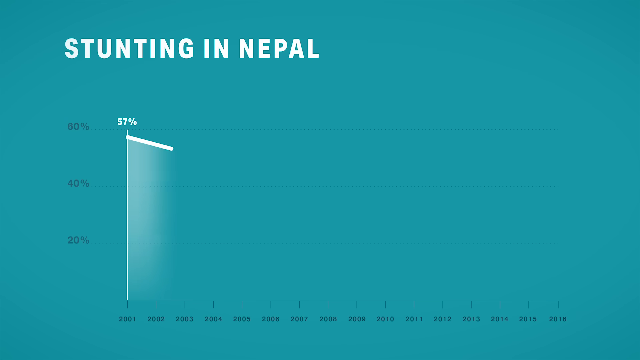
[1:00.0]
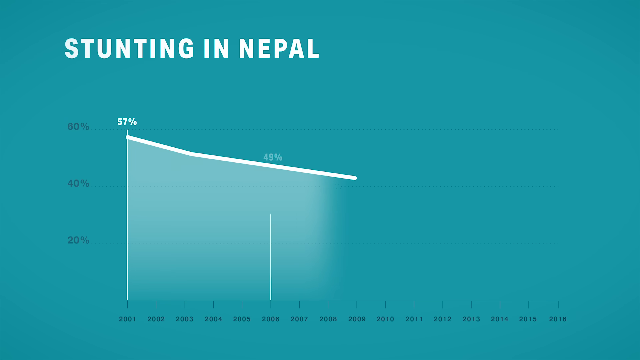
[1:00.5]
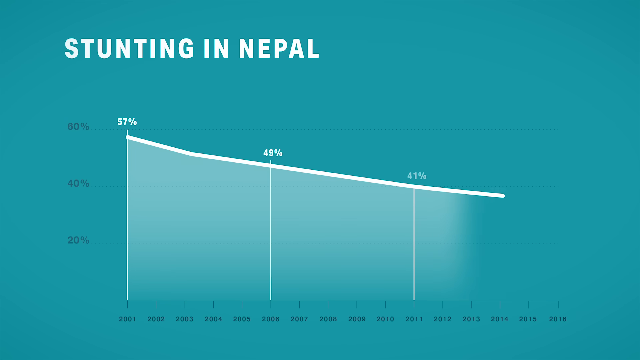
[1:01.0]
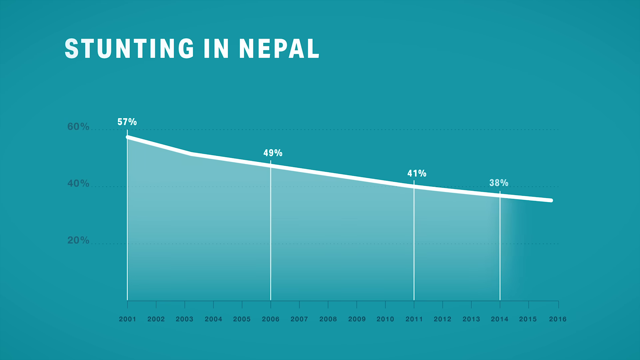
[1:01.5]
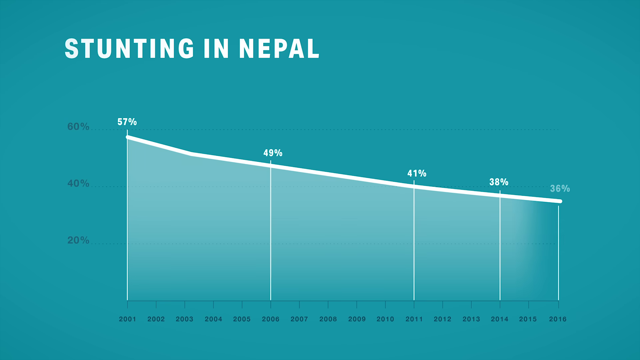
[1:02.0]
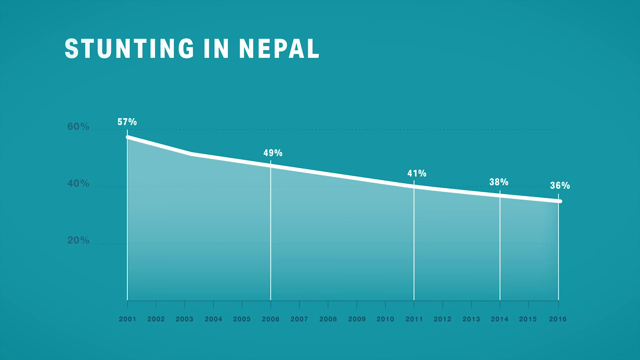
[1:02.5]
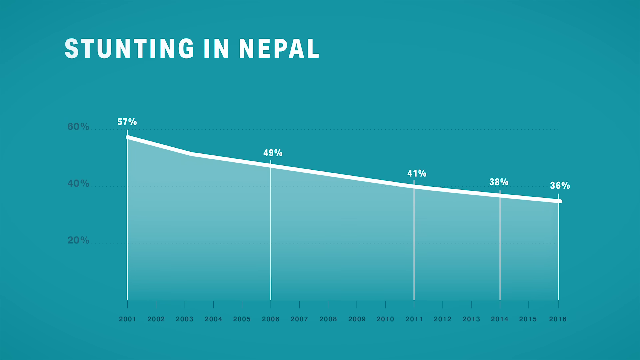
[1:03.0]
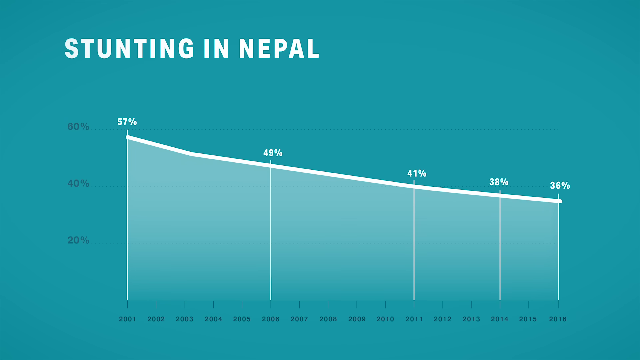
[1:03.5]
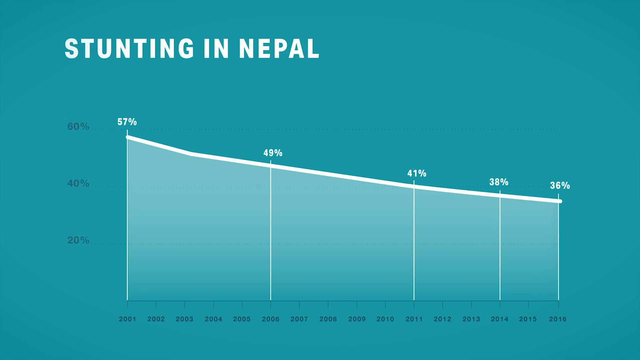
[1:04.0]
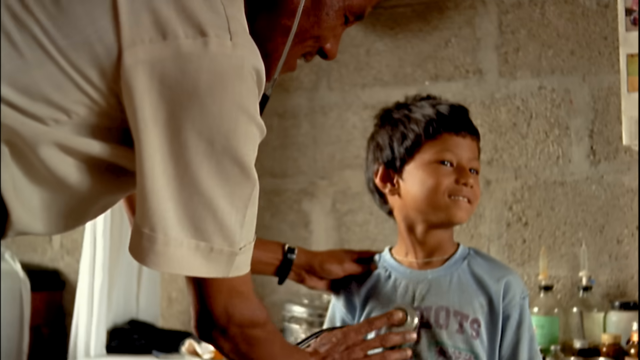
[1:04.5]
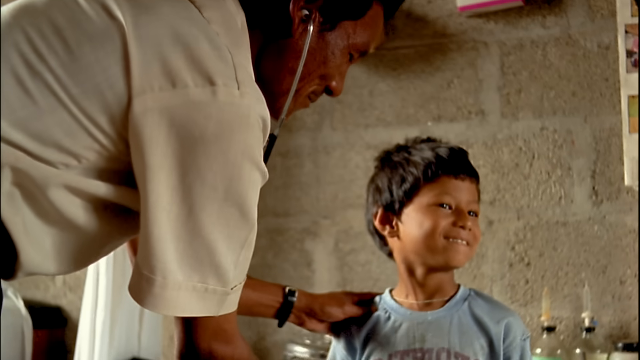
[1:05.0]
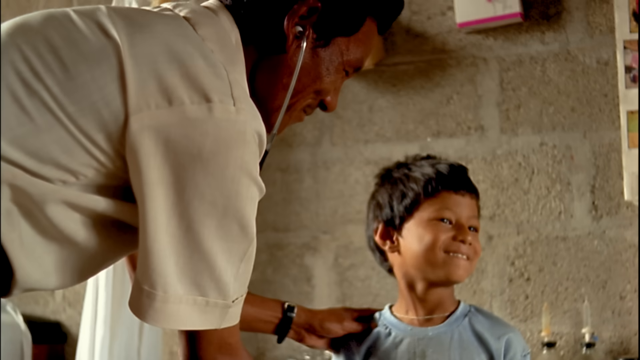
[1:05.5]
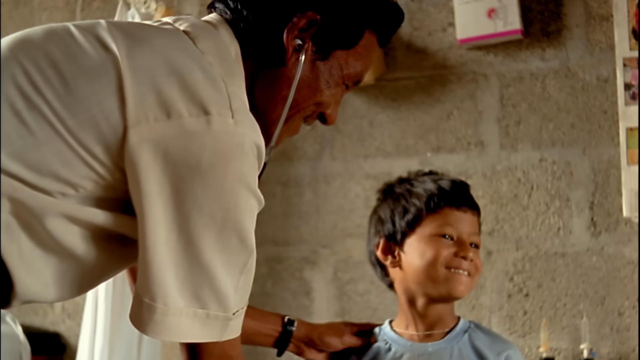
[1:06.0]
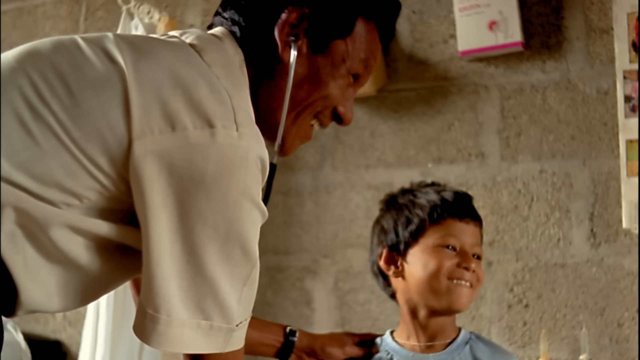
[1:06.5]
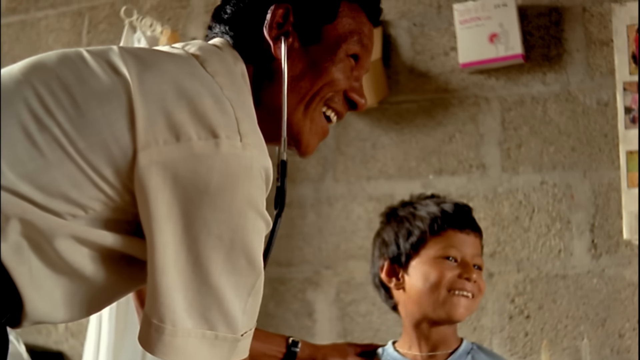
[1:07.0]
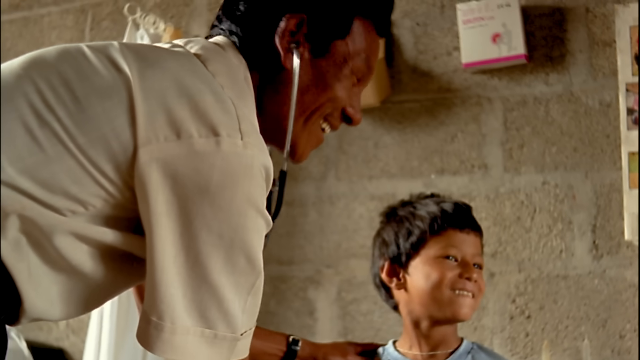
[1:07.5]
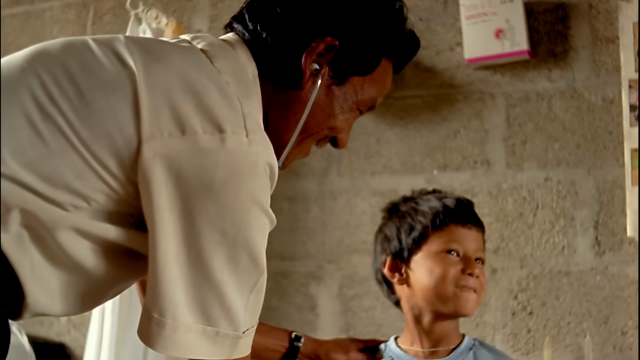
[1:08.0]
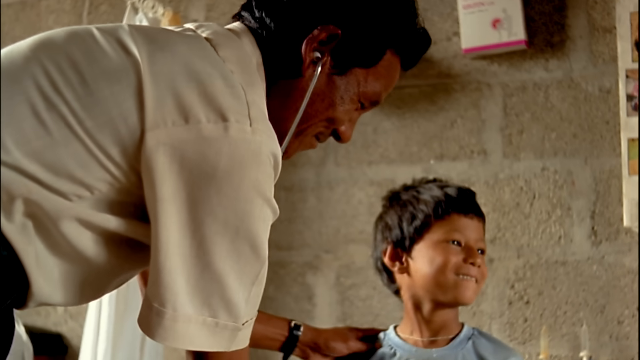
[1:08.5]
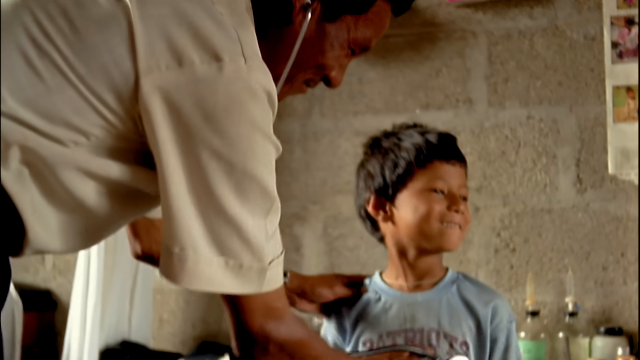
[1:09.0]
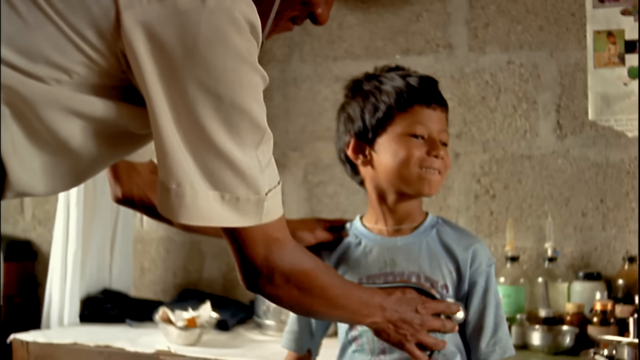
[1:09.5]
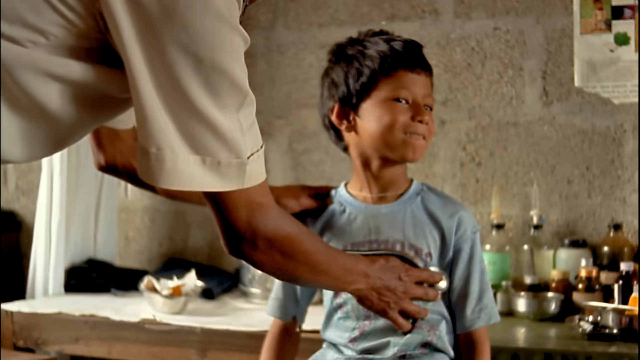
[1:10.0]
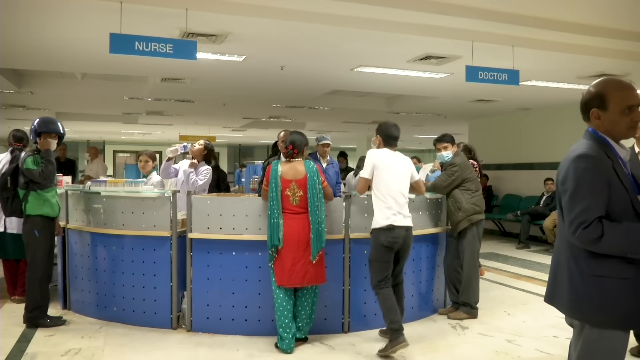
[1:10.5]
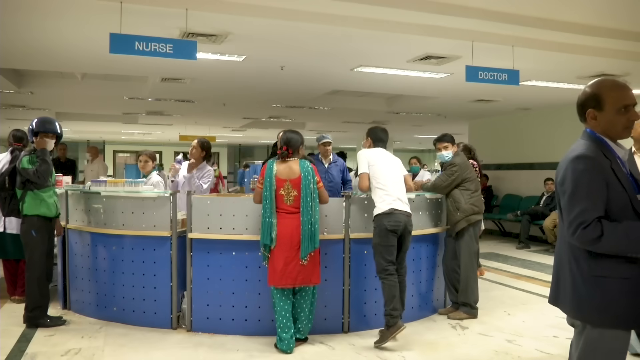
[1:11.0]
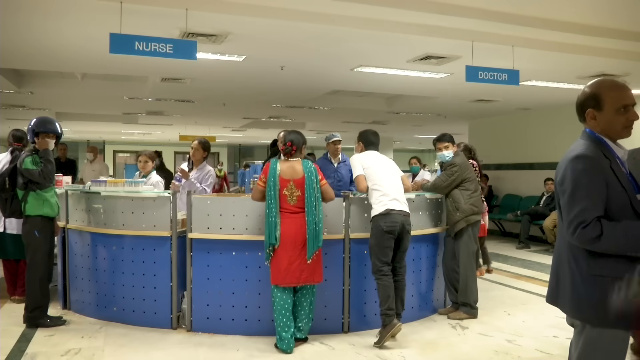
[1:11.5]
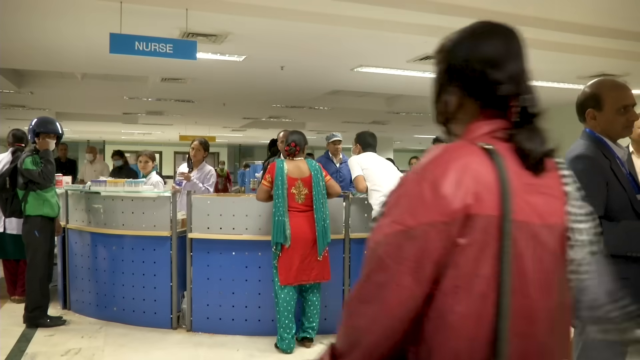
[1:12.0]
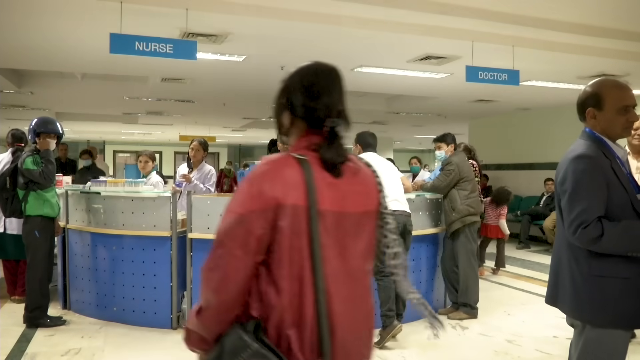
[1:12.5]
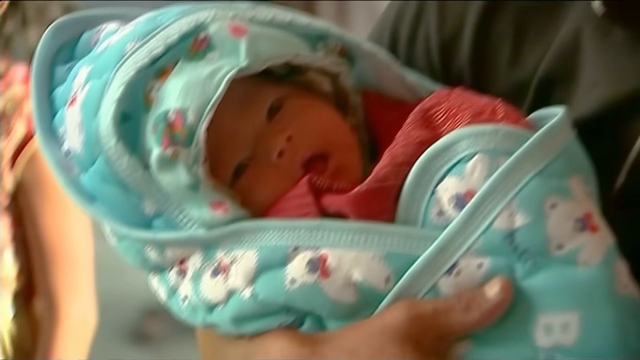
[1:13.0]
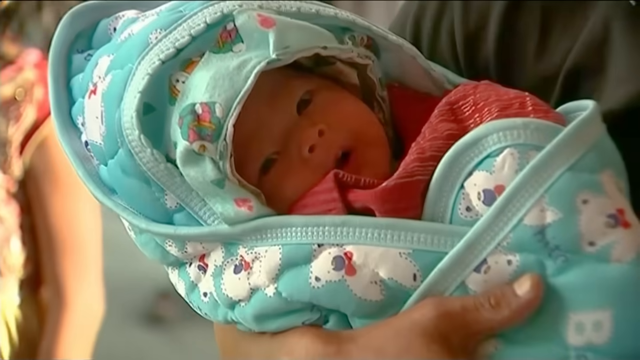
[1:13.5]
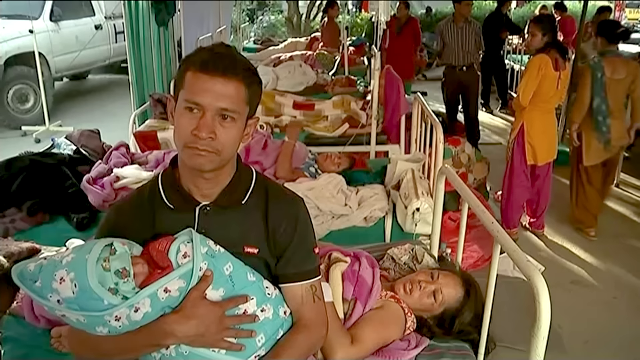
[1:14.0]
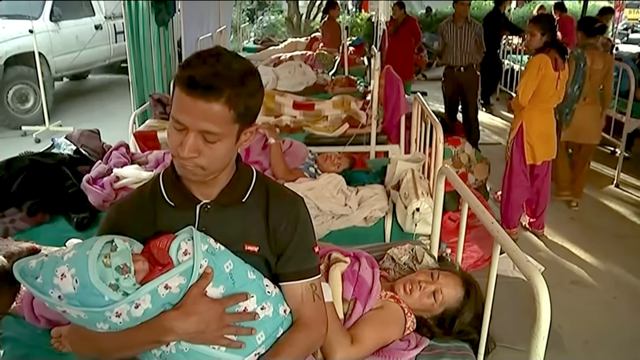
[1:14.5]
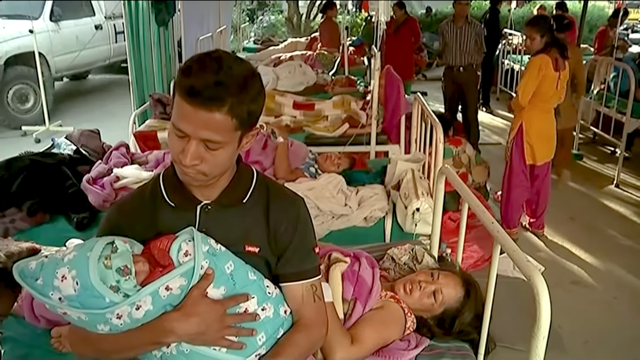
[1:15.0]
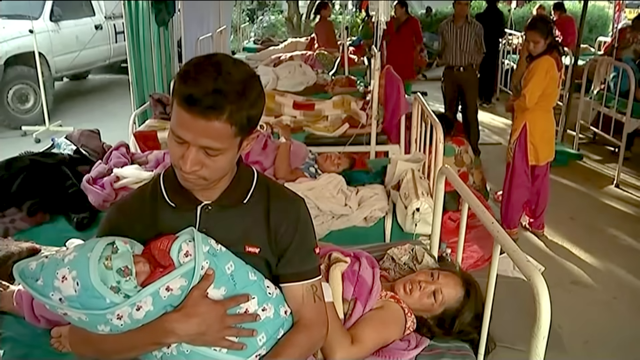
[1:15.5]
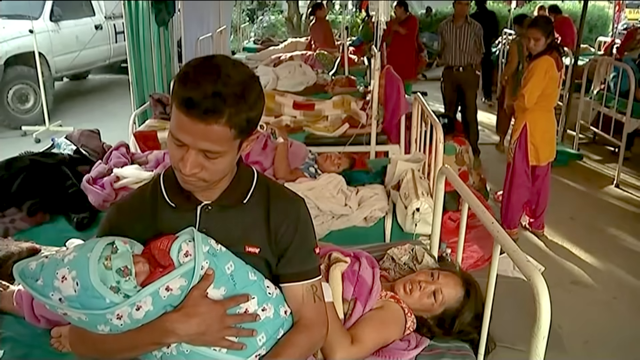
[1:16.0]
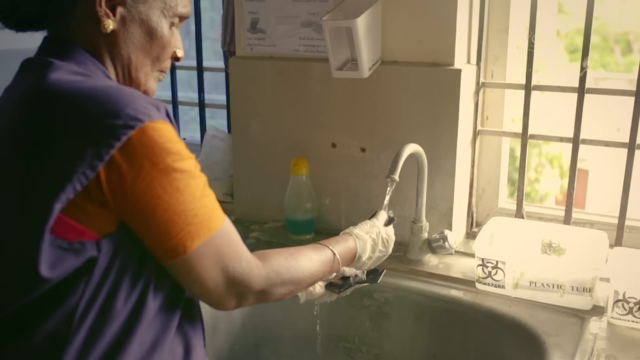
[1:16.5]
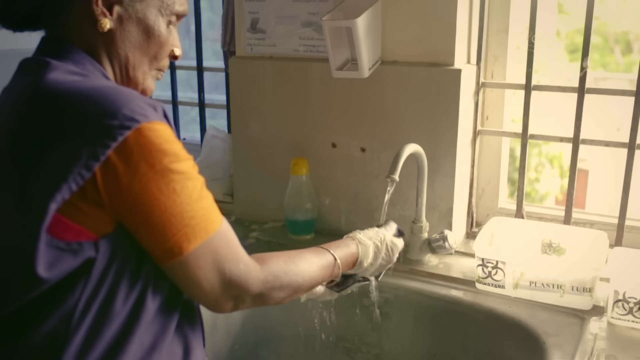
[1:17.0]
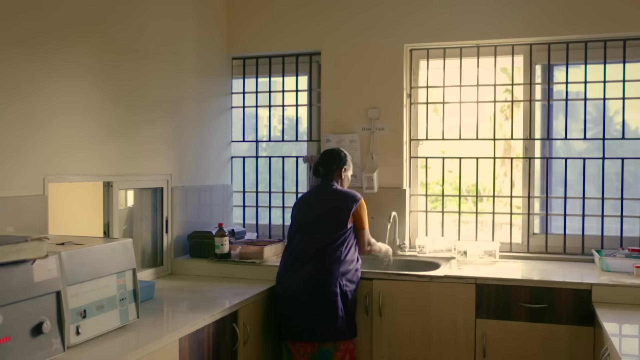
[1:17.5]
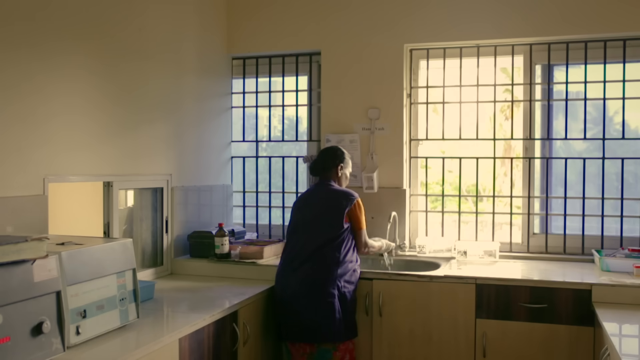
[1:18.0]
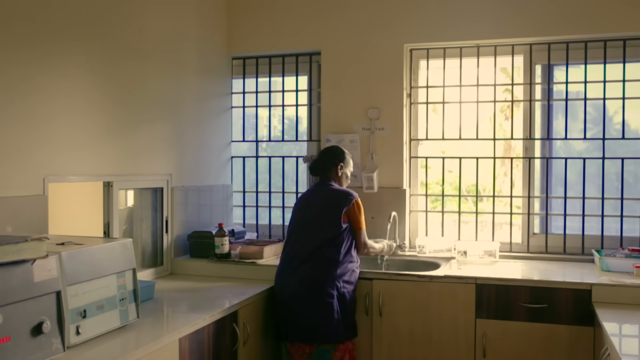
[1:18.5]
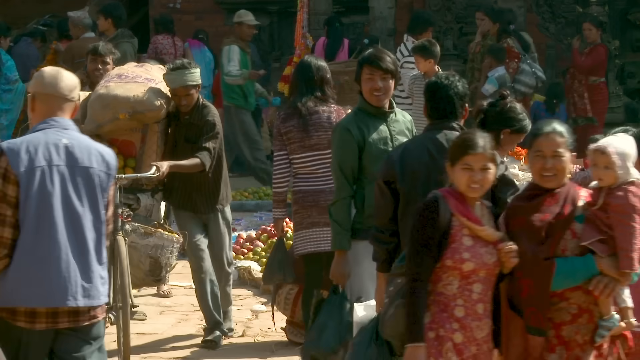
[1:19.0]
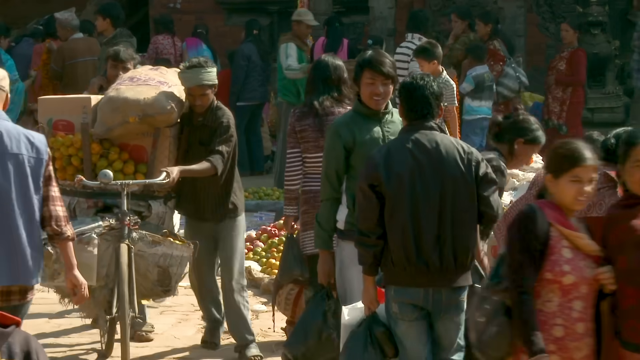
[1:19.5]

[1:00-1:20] An information graphic shows a graph titled "Stunting in Nepal", with a percentage on the left-hand side and years along the bottom; the line shows a downward trend. The scene changes to a doctor attending to a young boy inside a building that does not look like a hospital setting. Next is a hospital reception area with lots of people standing around. Then a hospital ward area with many beds and women with young babies appears; a car is visible, so it looks like an enclosed space but not inside a building. A lone woman stands at a sink, washing her hands or something. The scene then changes to a man outside on the street with a bike carrying fruit, with lots of fruit around being sold.